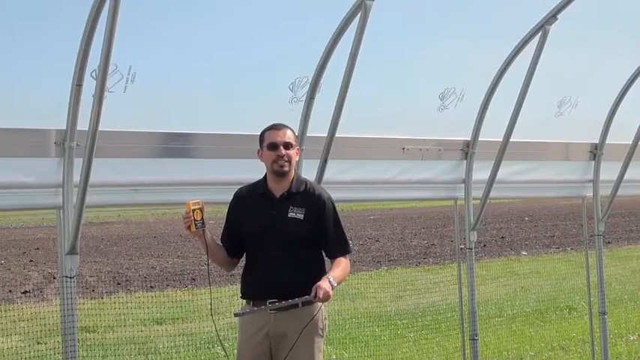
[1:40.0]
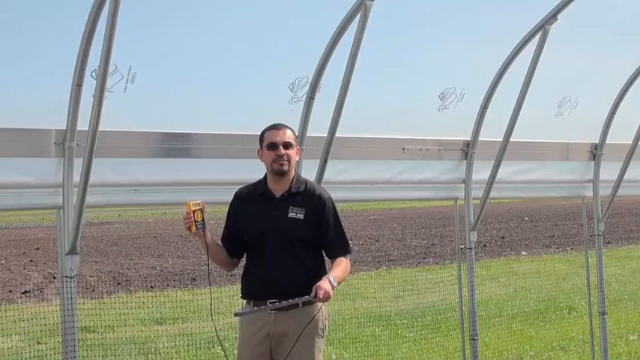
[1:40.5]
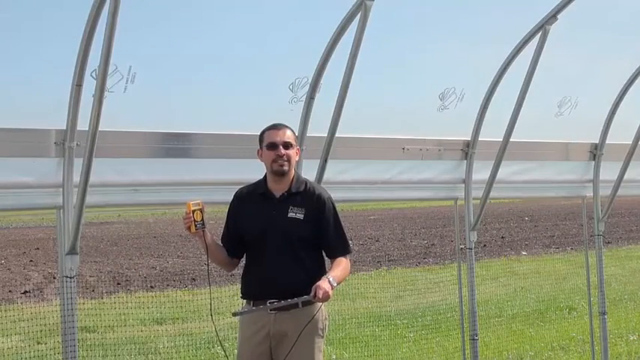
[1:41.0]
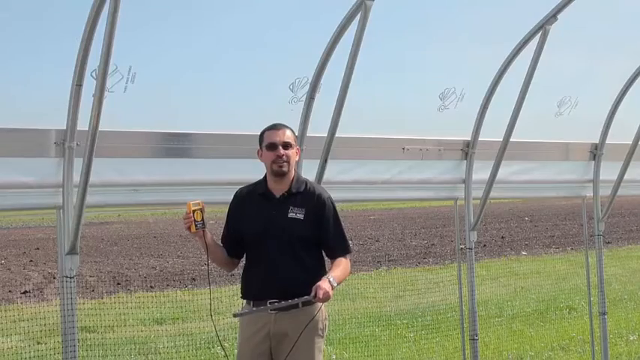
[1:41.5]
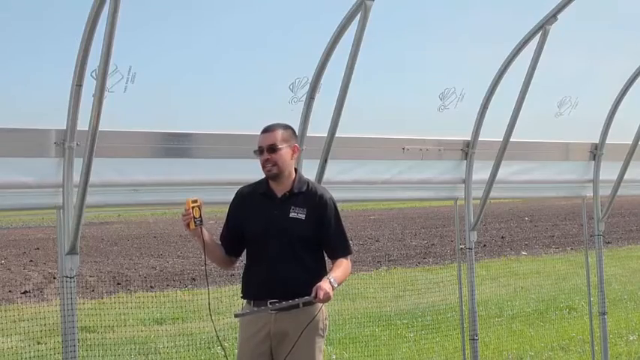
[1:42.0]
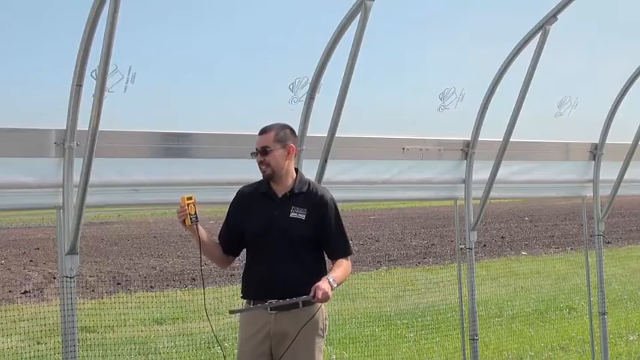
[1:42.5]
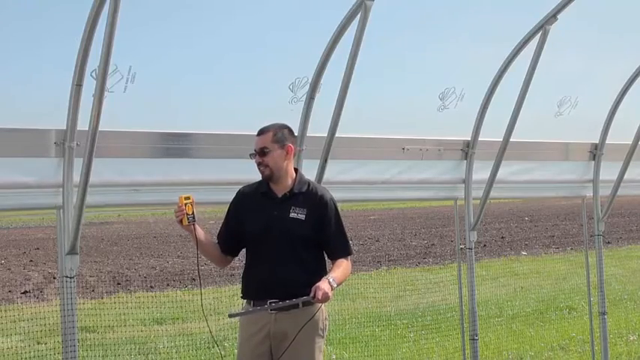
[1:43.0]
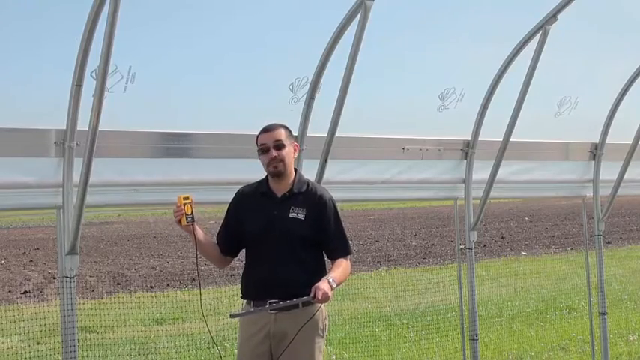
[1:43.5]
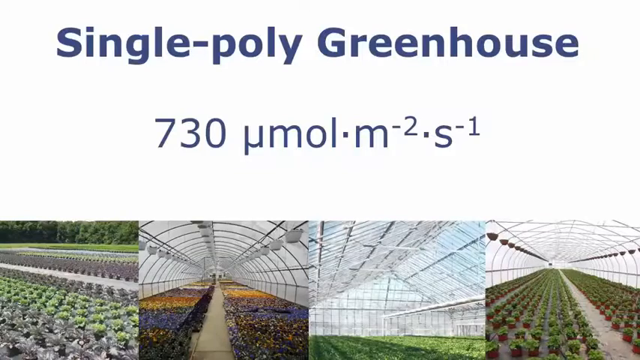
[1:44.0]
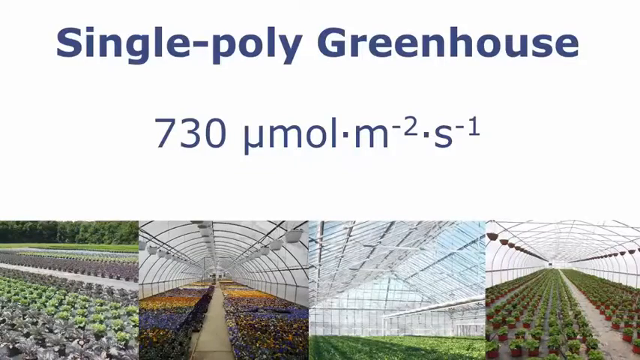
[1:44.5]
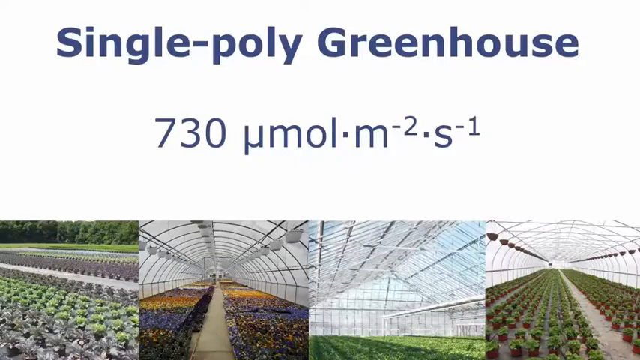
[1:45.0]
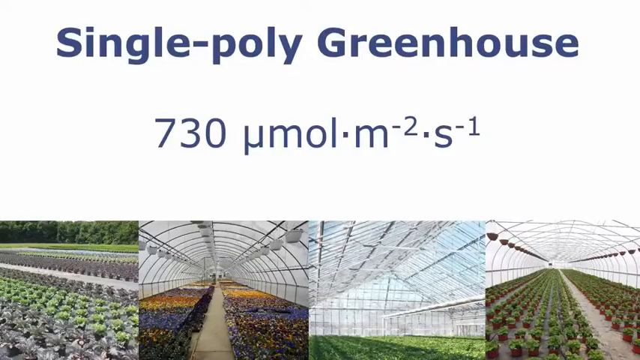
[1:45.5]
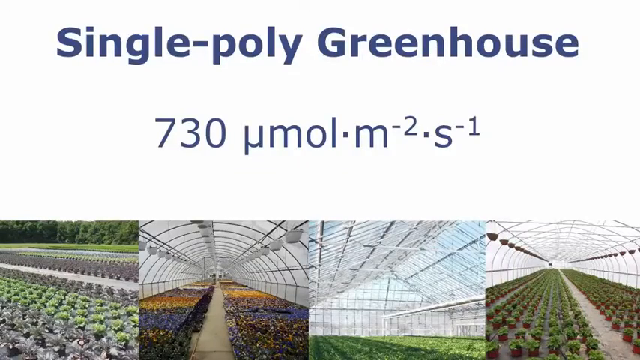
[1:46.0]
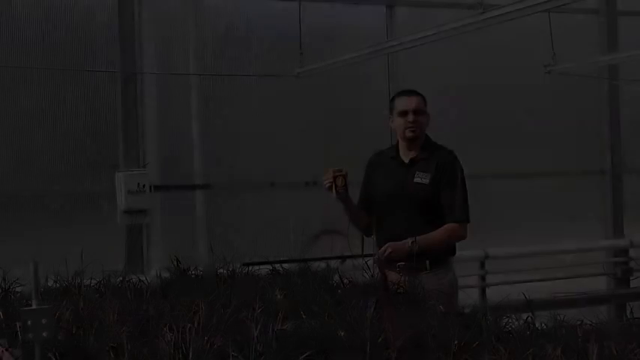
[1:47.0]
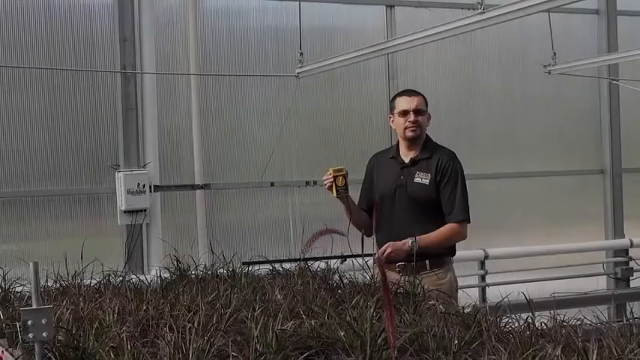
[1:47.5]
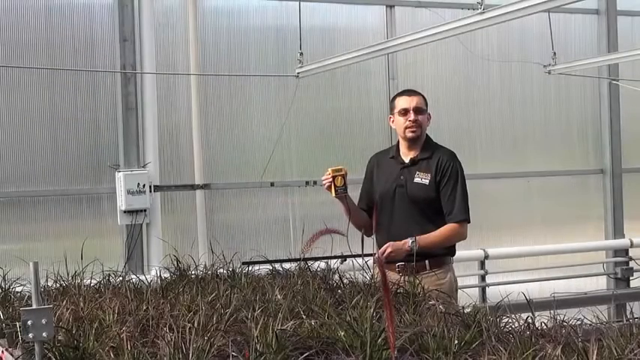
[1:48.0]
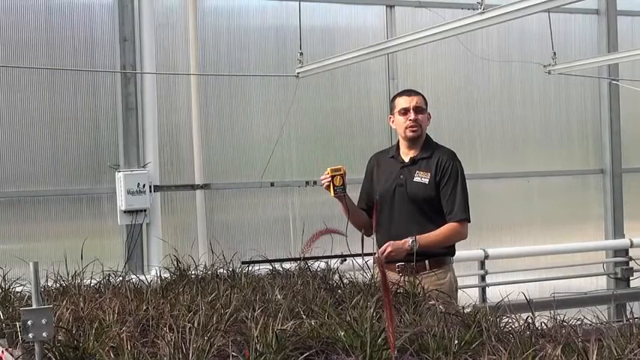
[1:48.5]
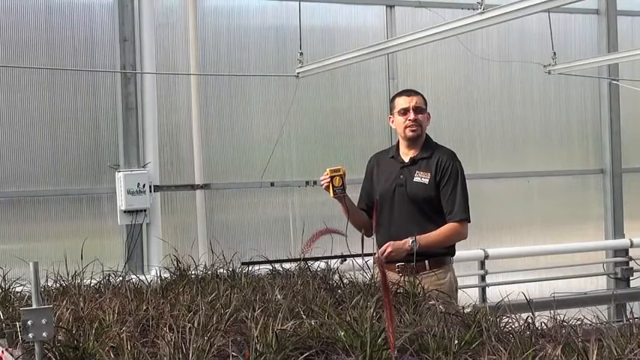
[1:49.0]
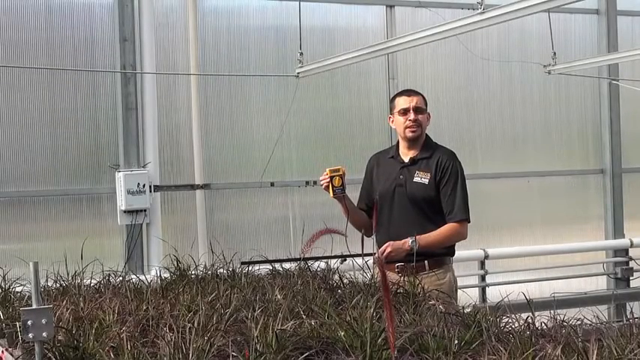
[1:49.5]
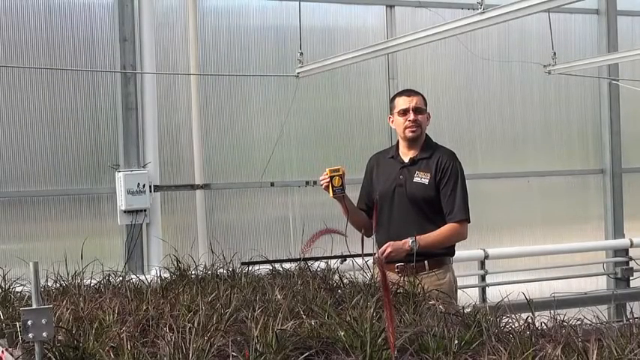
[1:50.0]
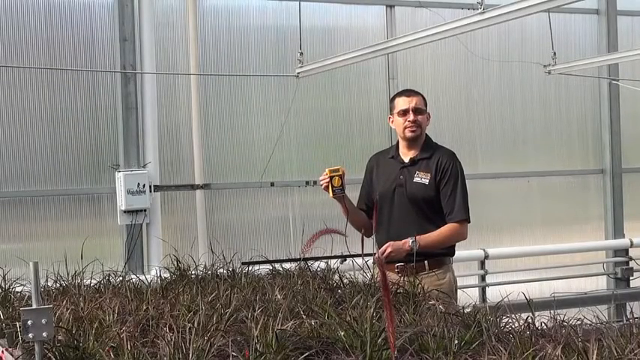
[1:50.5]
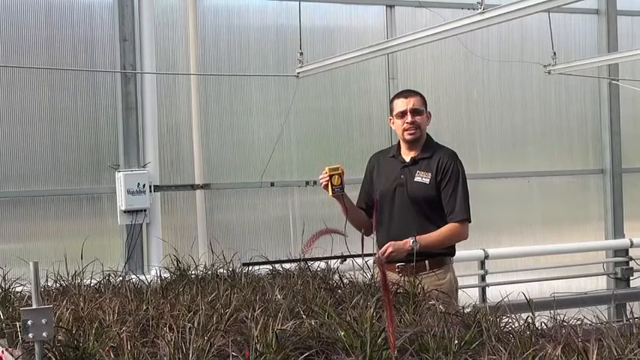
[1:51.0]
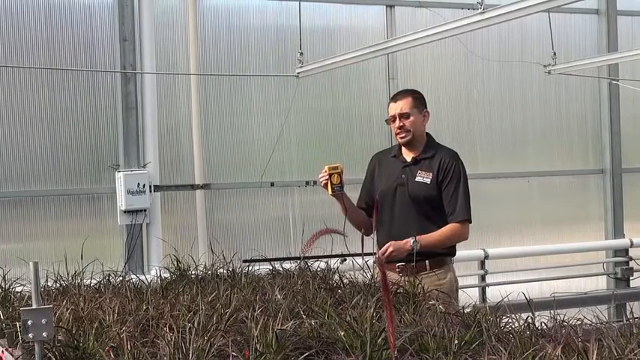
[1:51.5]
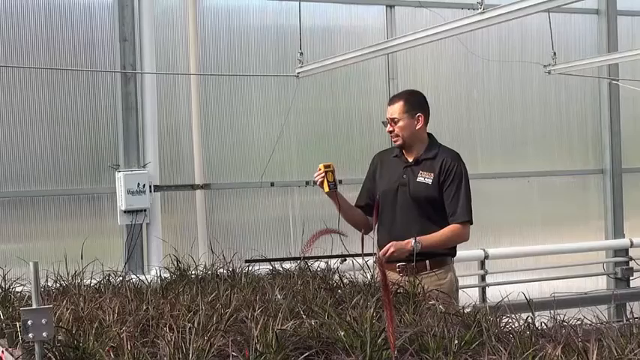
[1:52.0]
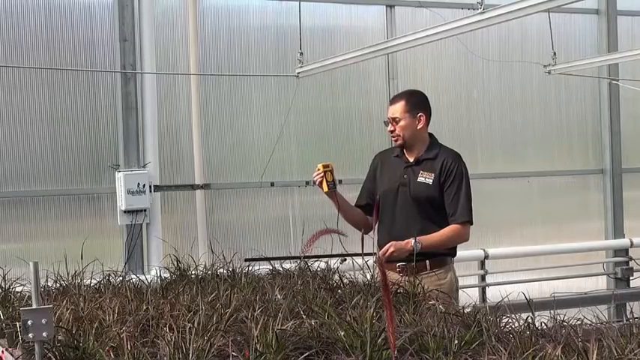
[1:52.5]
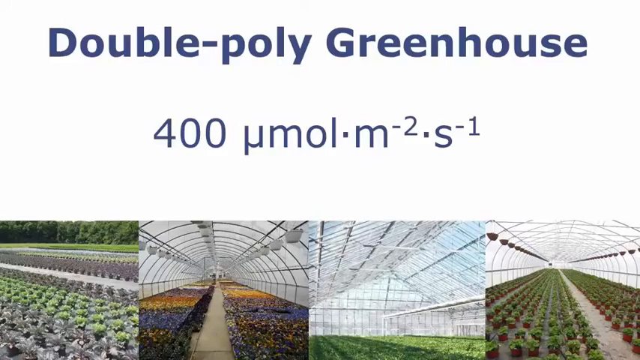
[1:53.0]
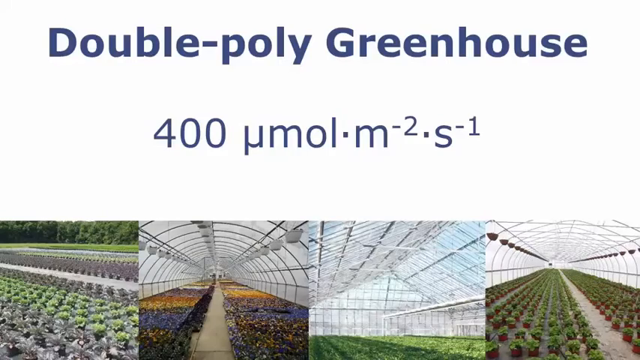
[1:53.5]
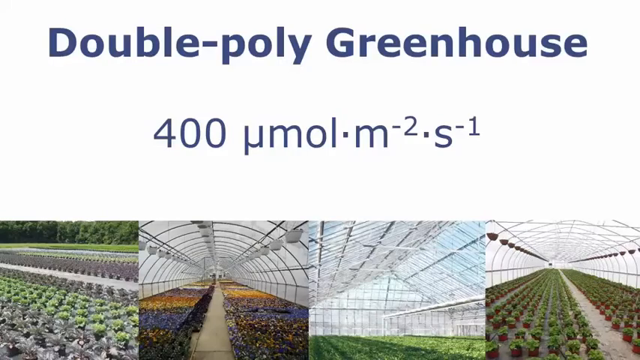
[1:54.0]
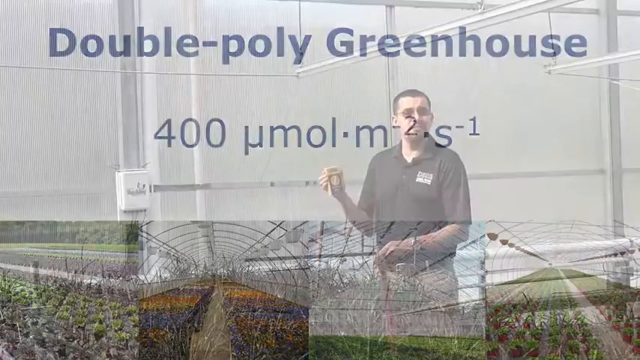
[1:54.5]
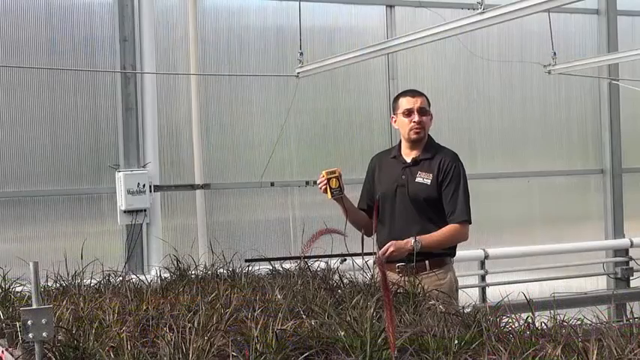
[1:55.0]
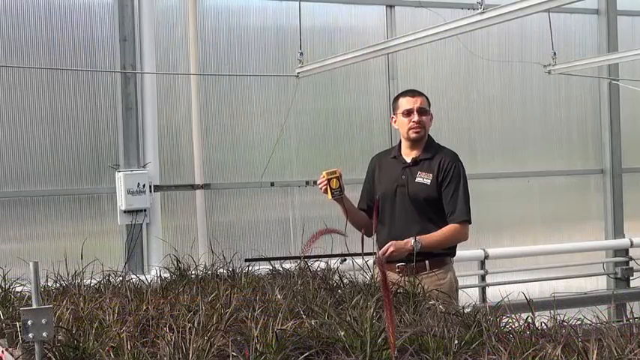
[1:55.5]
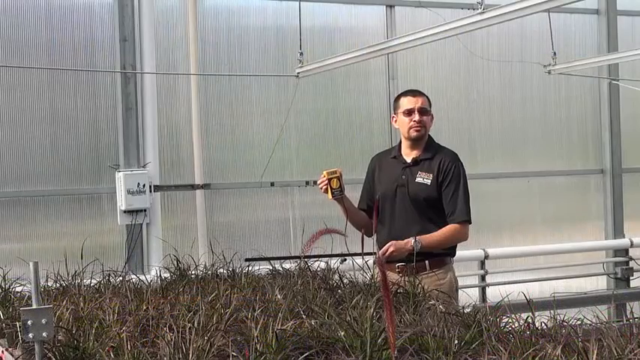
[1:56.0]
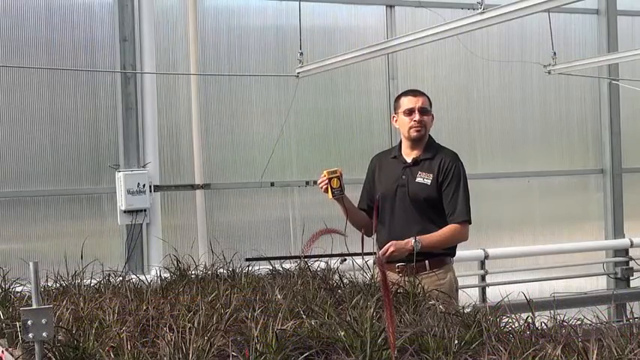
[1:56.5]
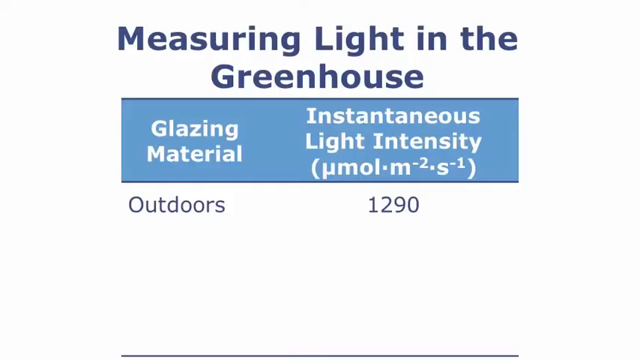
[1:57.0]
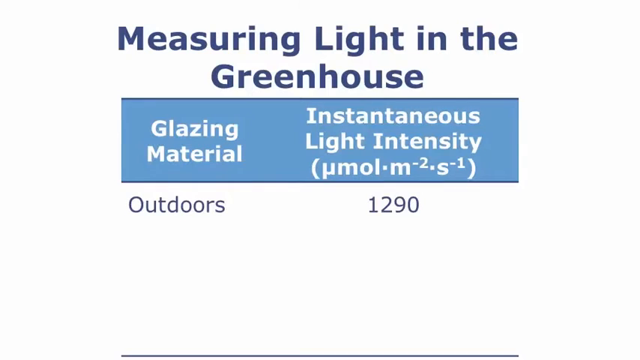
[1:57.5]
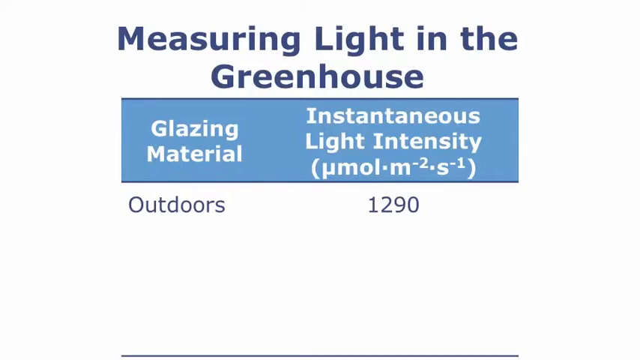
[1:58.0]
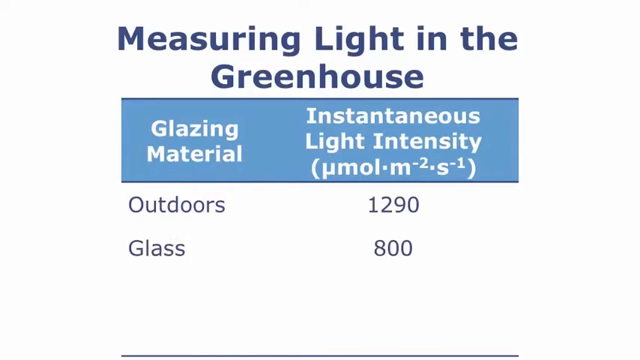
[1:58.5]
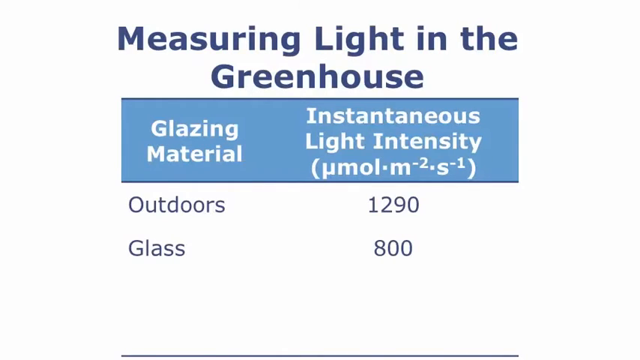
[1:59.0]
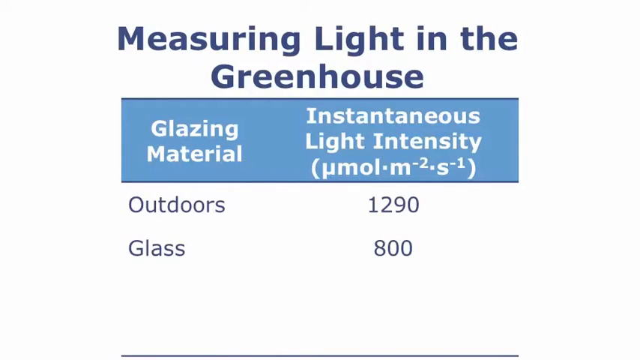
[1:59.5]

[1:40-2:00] A white man is in the center of the frame, wearing a black collared short-sleeved shirt with a white patch on the left chest, a brown belt with a silver buckle and cream-colored pants. He holds a gray squared wand in his left hand and wears a silver wristwatch. He has a brown goatee, brown sunglasses and short brown hair. In his right hand is a yellow electrical device with a black cord attached. Behind him are green grass, a brown patch of field, and four grey metal rods with a light grey covering attached to them as he talks to the camera. The next slide has a white section above with blue lettering reading "single-poly greenhouse" and "730," with an unreadable equation. Four pictures are at the bottom: grey and green pots in a row outside with green trees and grass in the background; yellow, orange, purple, blue and white plants in two rows with a grey patch in the middle under a rounded white roof; a green patch at the bottom under a triangular glass roof; and, to the right, green pots with a grey path slightly to the right under a round white and grey lined roof. The next shot shows the white man with short brown hair, brown sunglasses and a brown goatee in a black collared short-sleeved shirt with a white patch on the left chest, holding a yellow meter with a black cord in his right hand and wearing a silver wristwatch on his left. Behind him is a grey paneled sheet, with a grey section on the left side holding a white electrical panel, and a white pole behind him. In front of him is grey and green tall grass. He wears a brown belt with a grey buckle and cream-colored pants as he talks to the camera. Next, a slide with a white background has blue lettering reading "measuring light in the greenhouse." A blue box has white lettering reading "glazing material" on the left and "instantaneous light intensity" on the right, with an unreadable mathematical equation in a closed bracket. Below, in black, rows read "outdoors" with "1290," "glass" with "800," and "single poly."